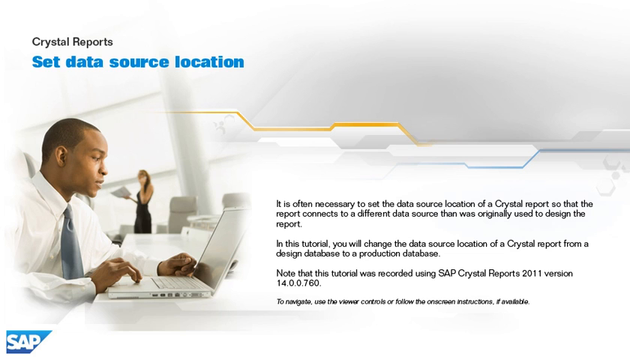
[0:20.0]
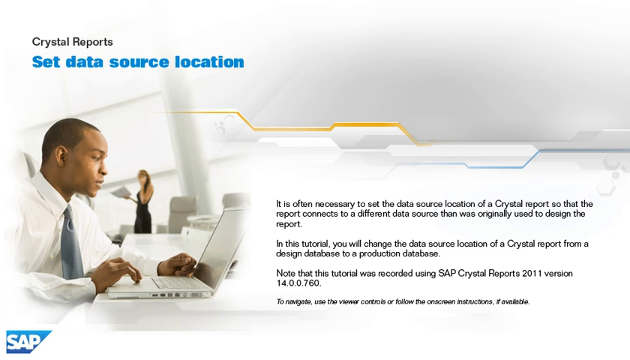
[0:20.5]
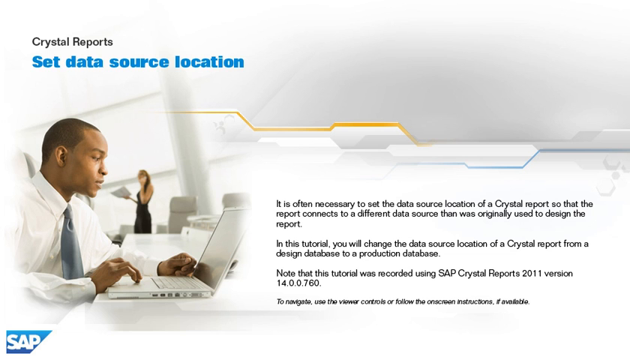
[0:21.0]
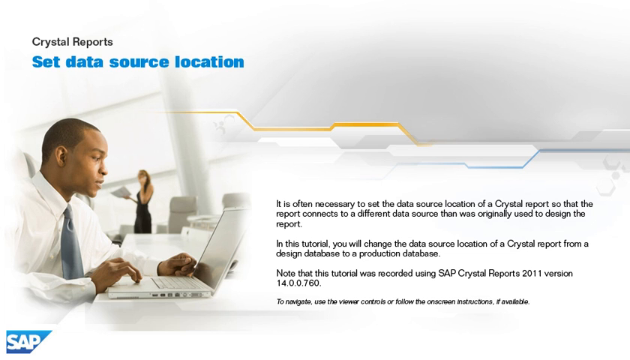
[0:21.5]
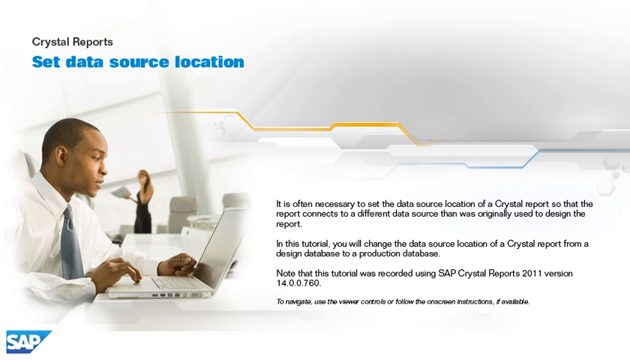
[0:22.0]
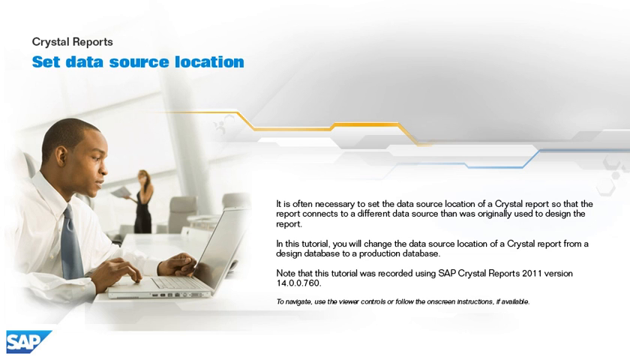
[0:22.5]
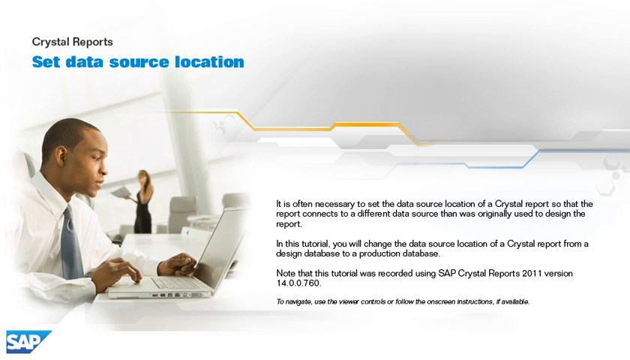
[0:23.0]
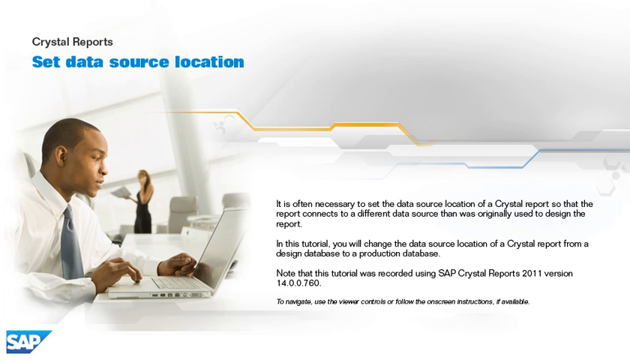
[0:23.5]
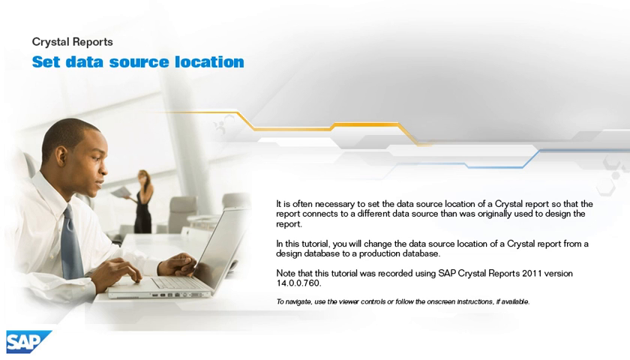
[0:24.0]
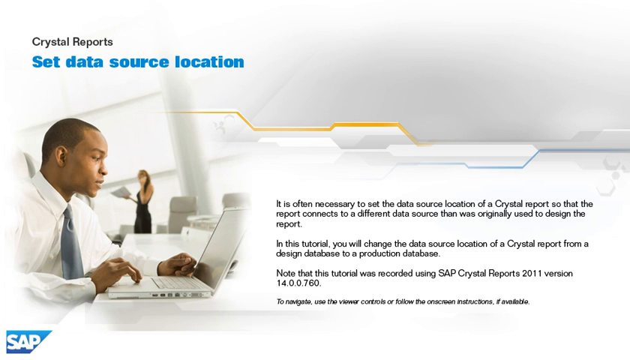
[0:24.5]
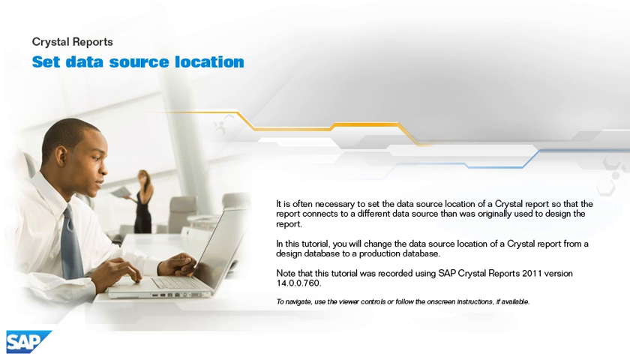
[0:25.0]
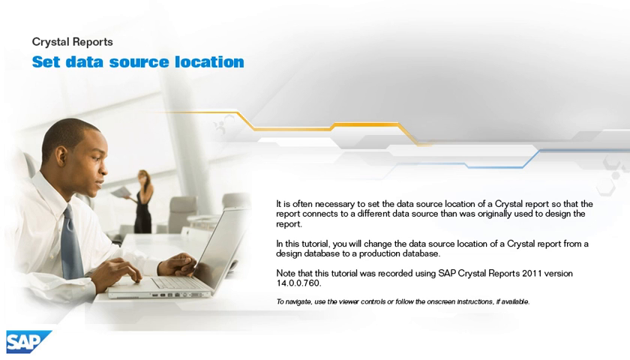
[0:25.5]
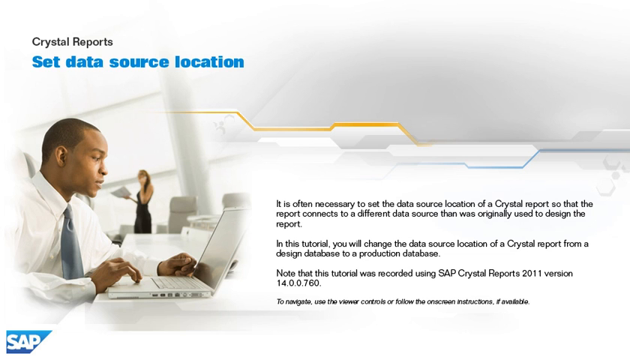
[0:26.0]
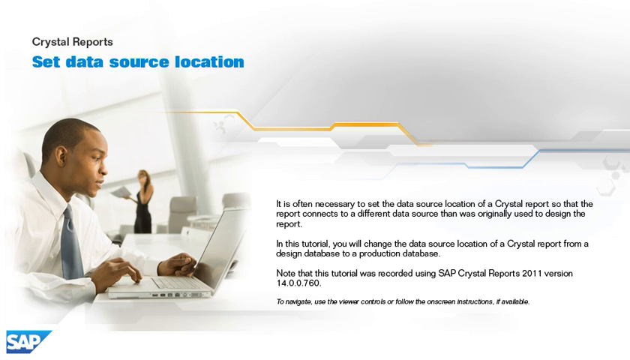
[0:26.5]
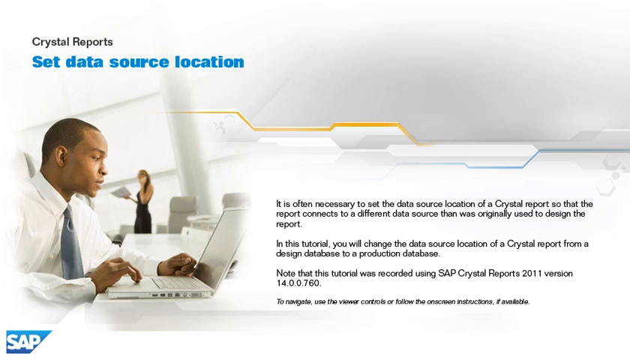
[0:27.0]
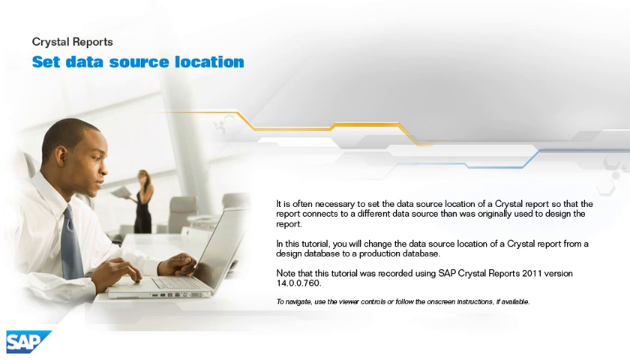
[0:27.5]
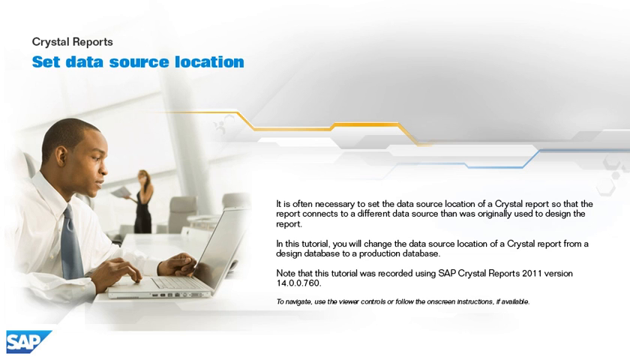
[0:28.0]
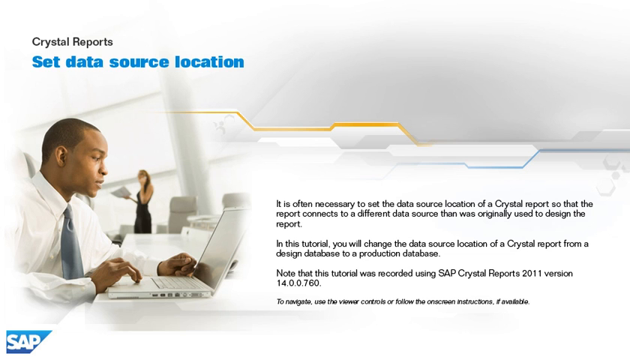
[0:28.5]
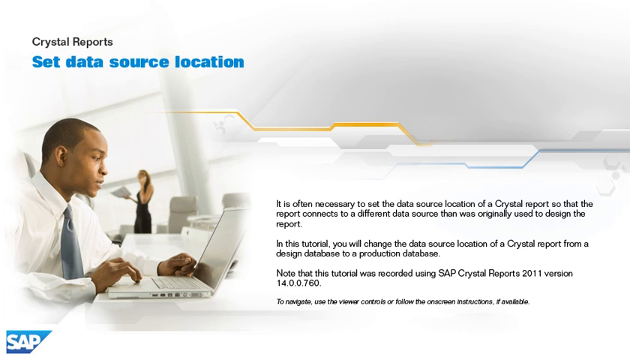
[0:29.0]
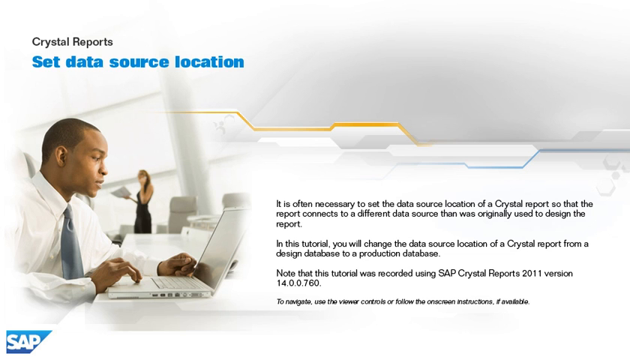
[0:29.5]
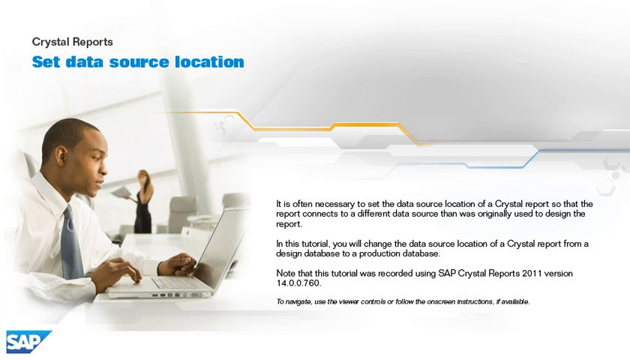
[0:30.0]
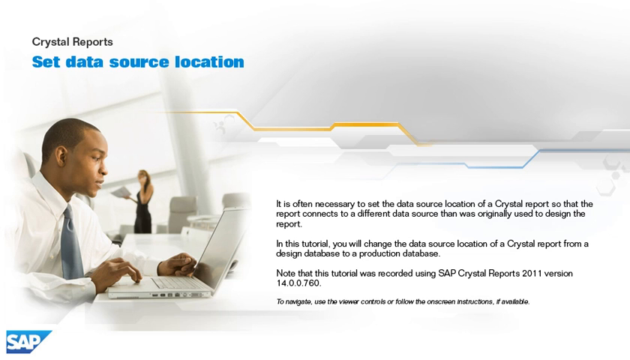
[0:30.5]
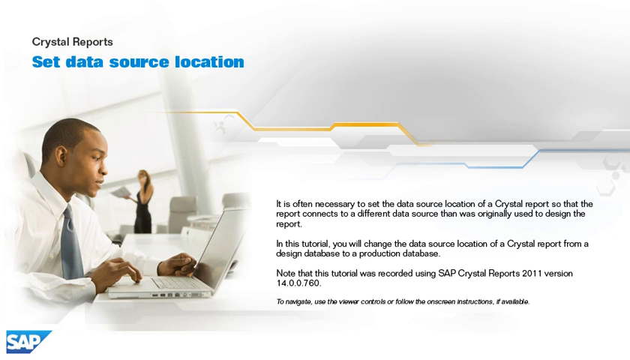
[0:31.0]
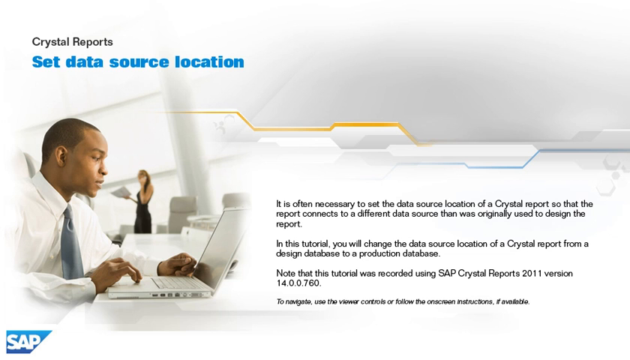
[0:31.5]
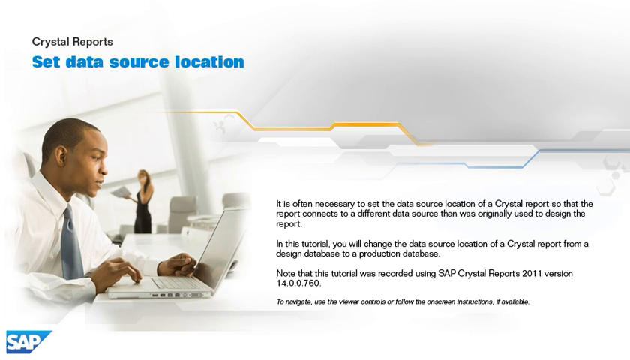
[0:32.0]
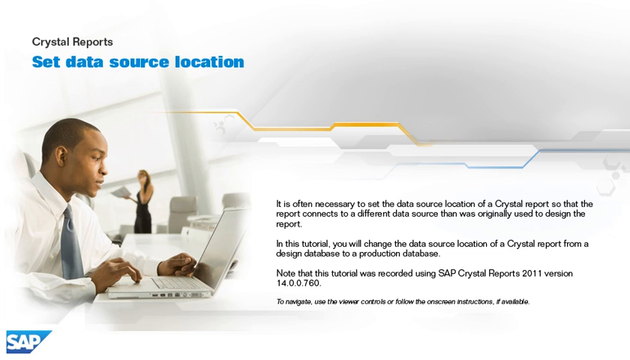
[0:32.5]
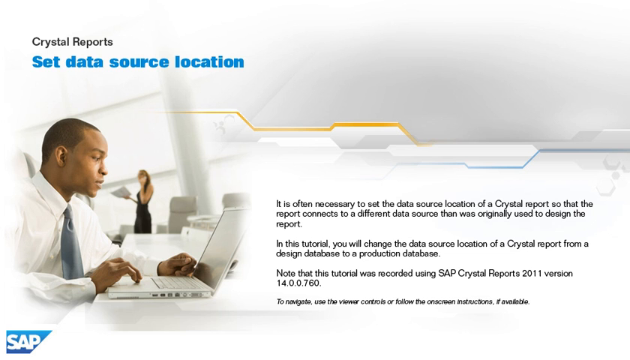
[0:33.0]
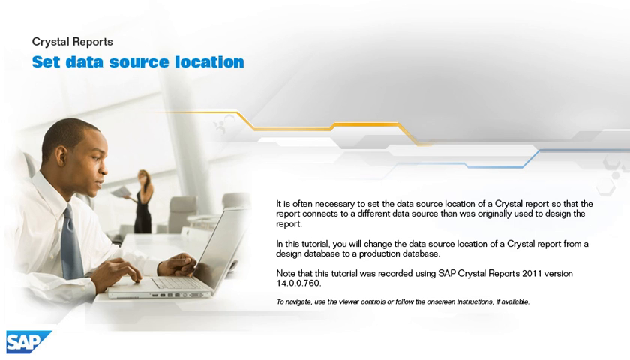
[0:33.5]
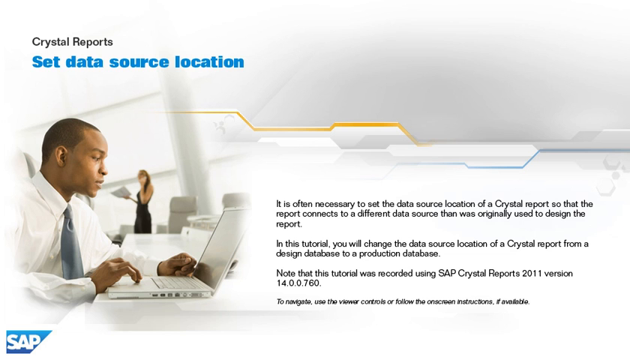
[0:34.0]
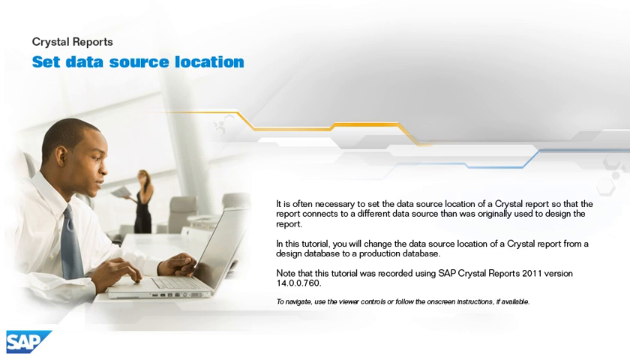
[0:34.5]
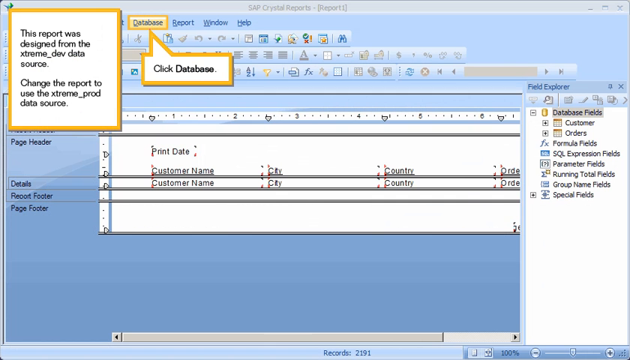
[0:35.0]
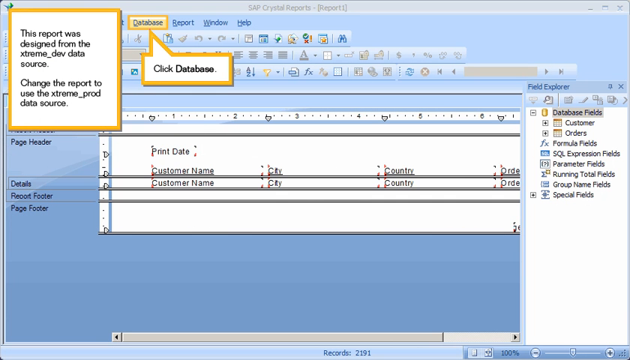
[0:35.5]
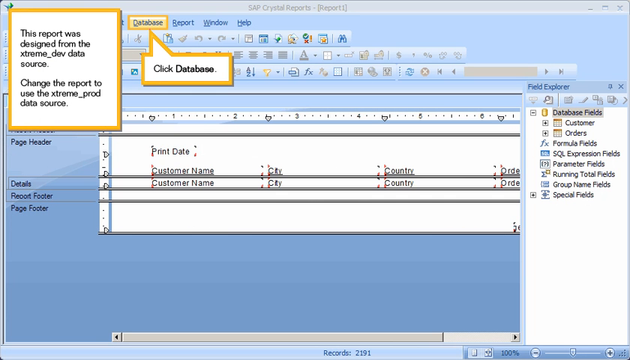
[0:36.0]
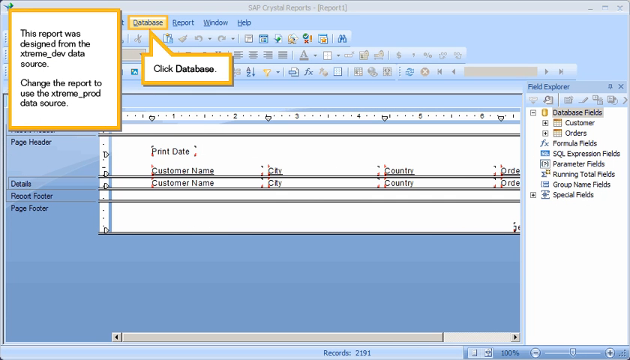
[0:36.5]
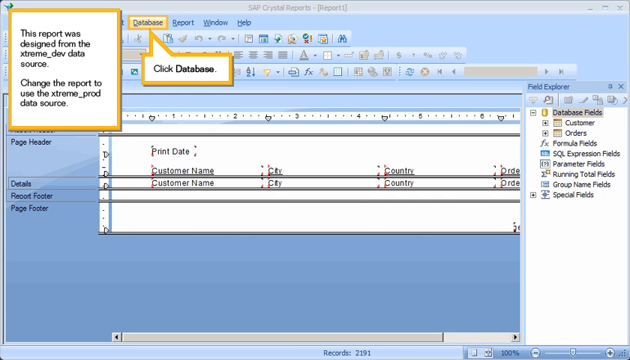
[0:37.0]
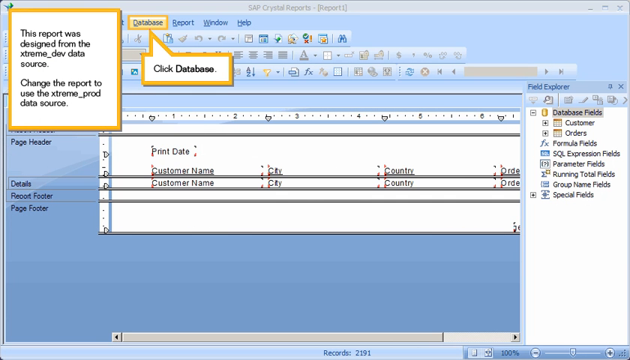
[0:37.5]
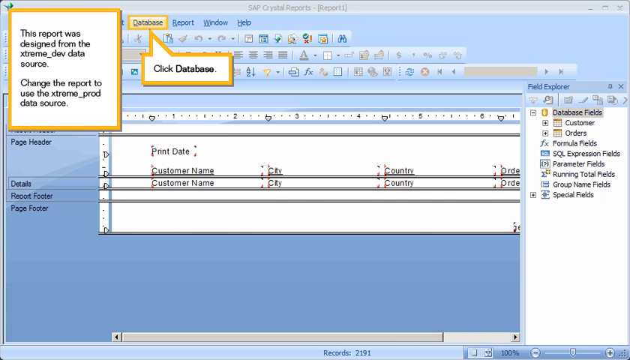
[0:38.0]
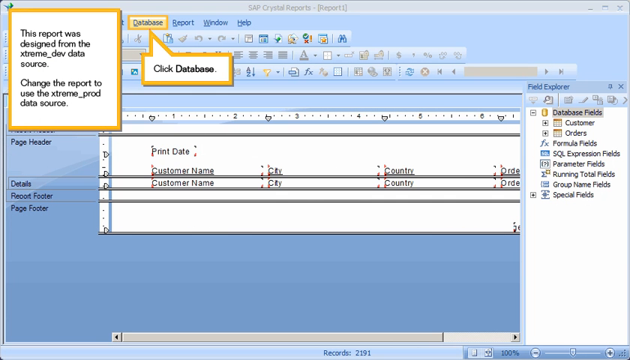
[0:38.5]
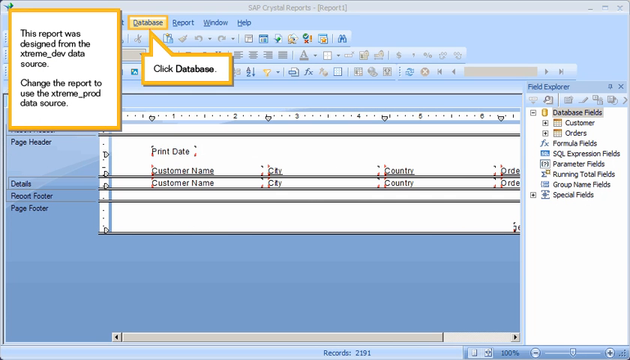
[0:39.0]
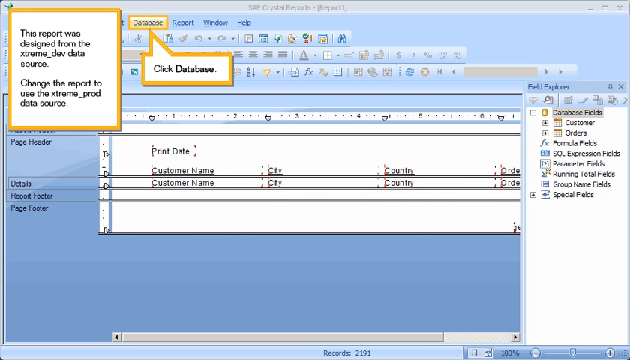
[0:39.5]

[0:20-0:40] The same graphic and text, with the same man operating the laptop, remain unchanged. Several seconds in, the screen jumps abruptly to a new image that appears to be a screenshot or shared screen with a predominantly blue window, with program and file operation information across the top. A white dialog box framed in yellow says "this report was designed from the Xtreme Dev data source. Change the report to use the Xtreme Prod data source." Another white text box framed in yellow says "click database." Various database details are framed in blue. A white region that appears to be a text area shows print date, customer name, customer name, city, country, order. A vertical rectangle on the right-hand side holds further details for the program.